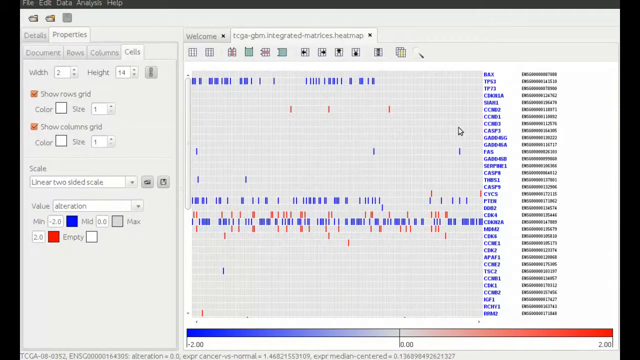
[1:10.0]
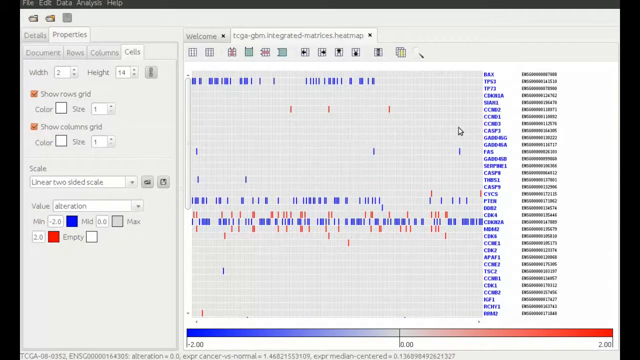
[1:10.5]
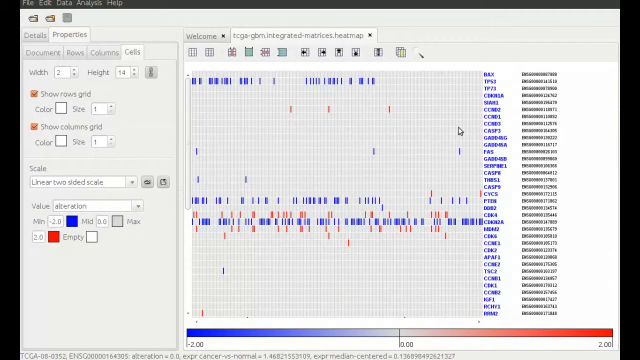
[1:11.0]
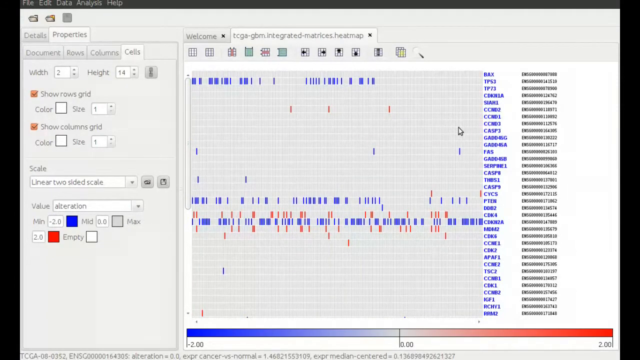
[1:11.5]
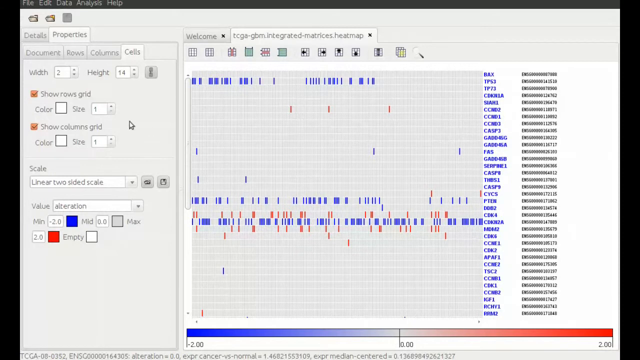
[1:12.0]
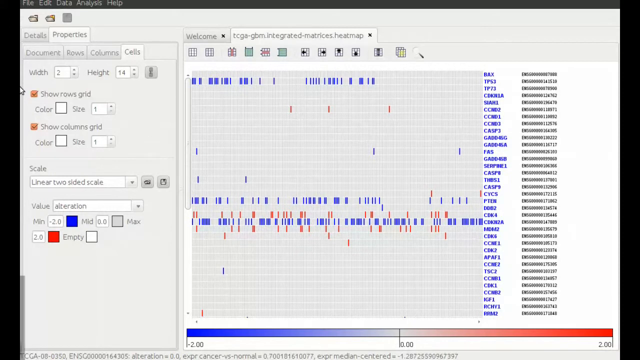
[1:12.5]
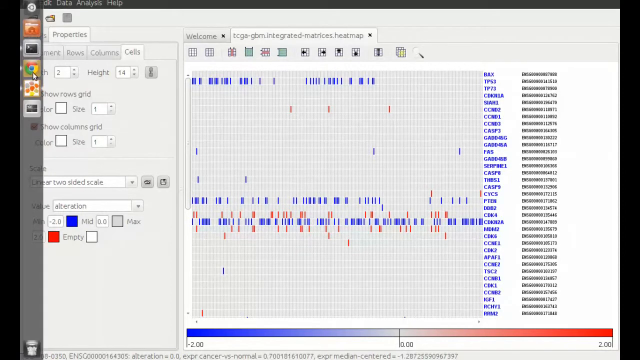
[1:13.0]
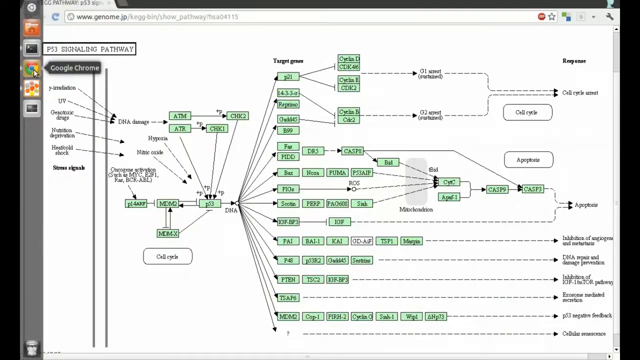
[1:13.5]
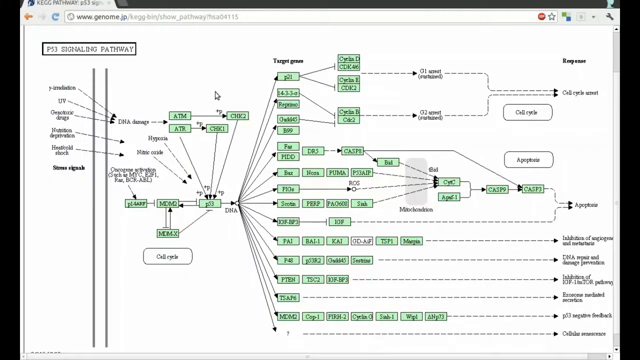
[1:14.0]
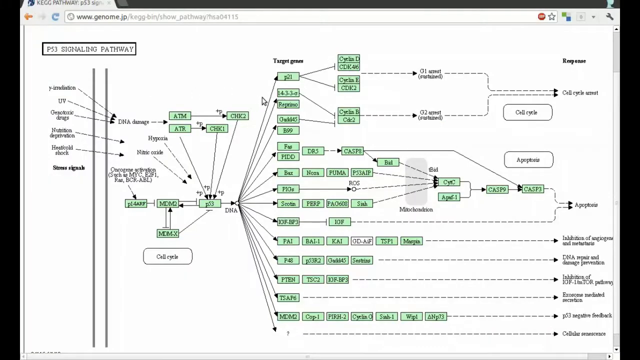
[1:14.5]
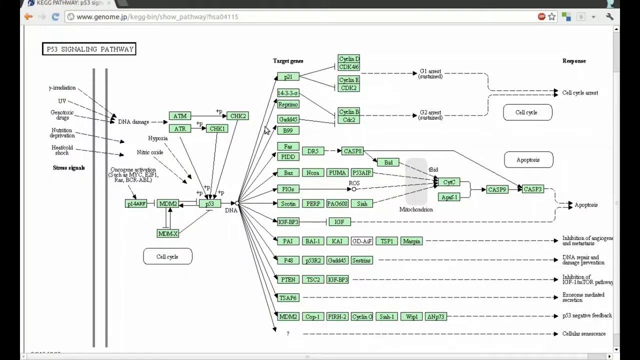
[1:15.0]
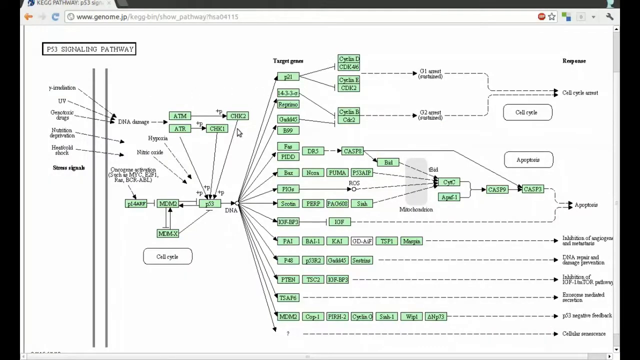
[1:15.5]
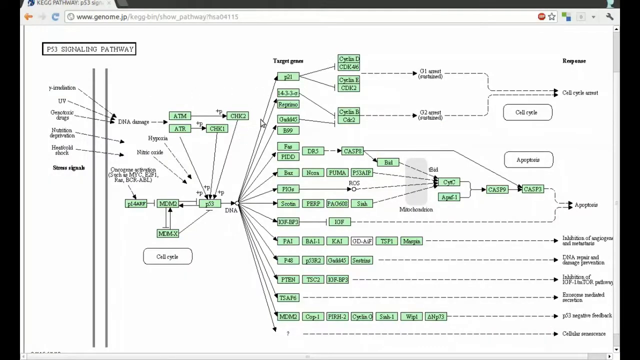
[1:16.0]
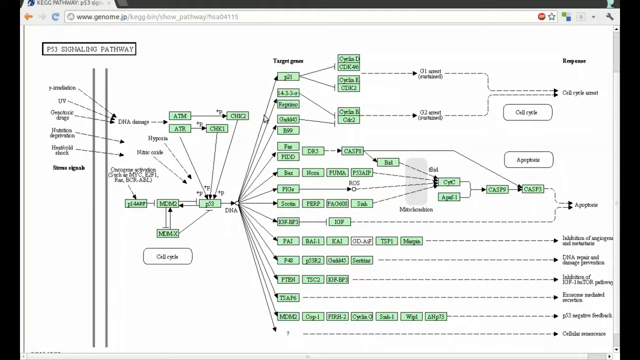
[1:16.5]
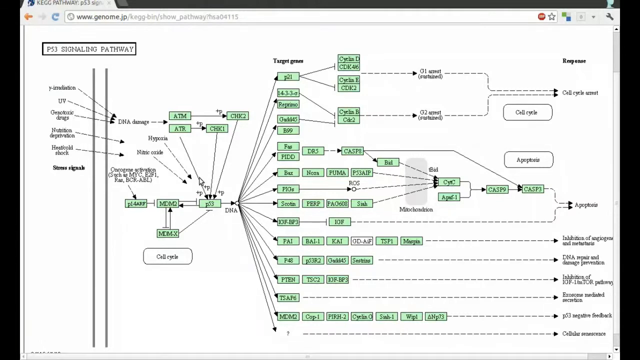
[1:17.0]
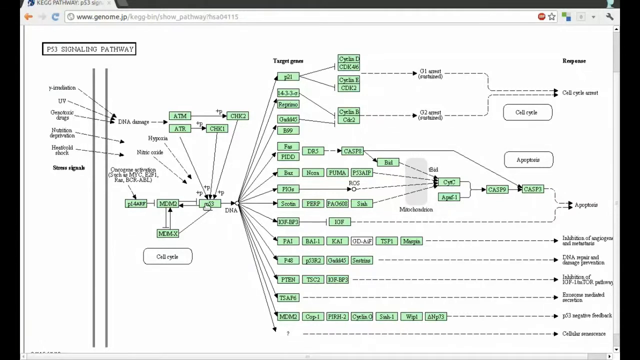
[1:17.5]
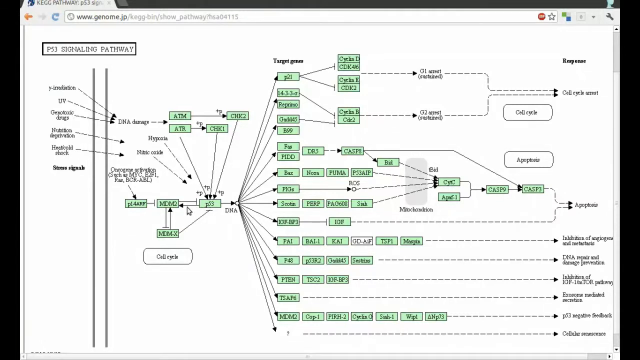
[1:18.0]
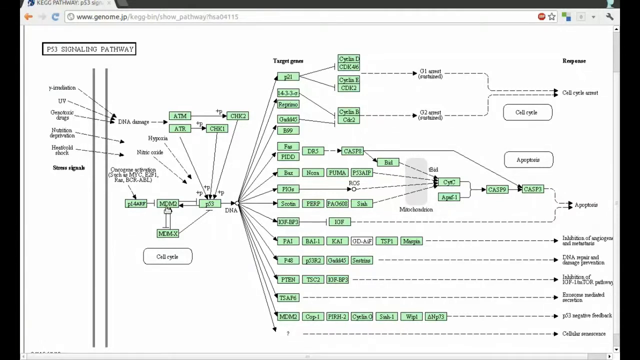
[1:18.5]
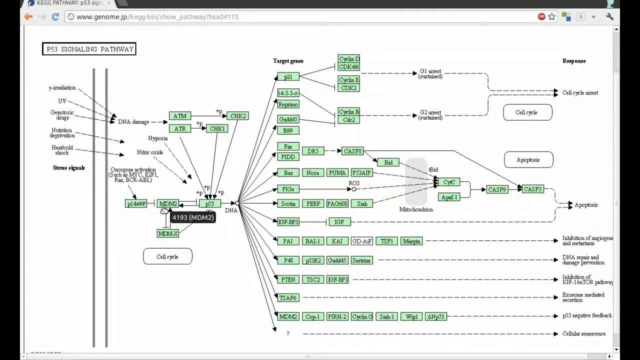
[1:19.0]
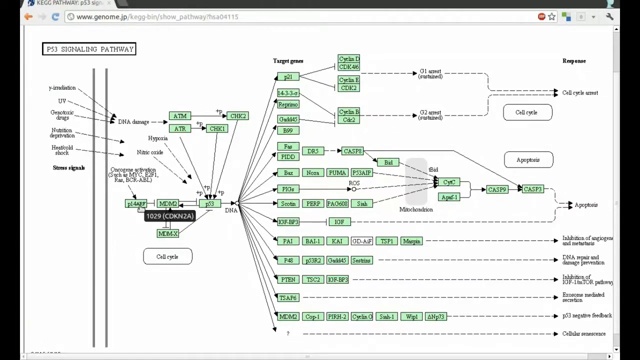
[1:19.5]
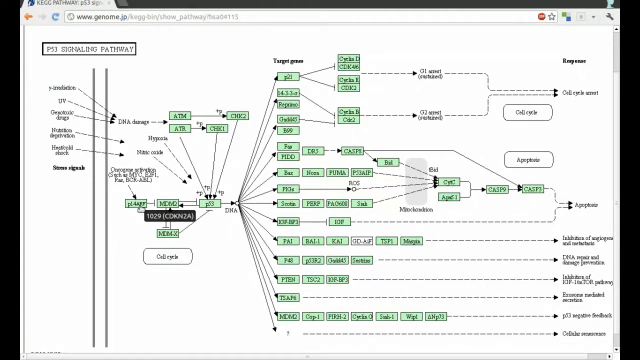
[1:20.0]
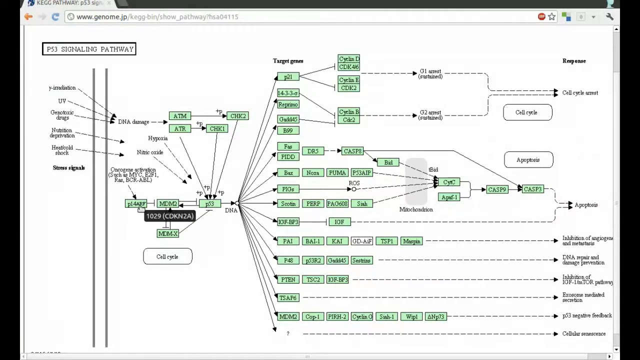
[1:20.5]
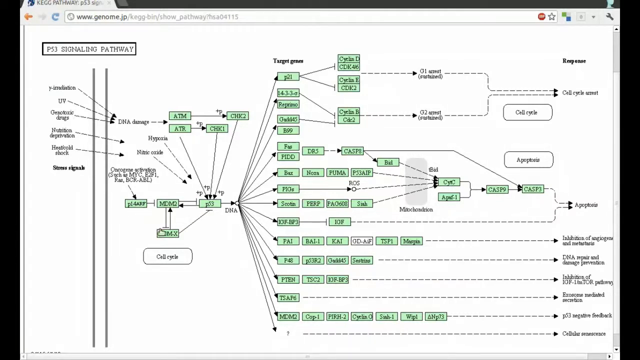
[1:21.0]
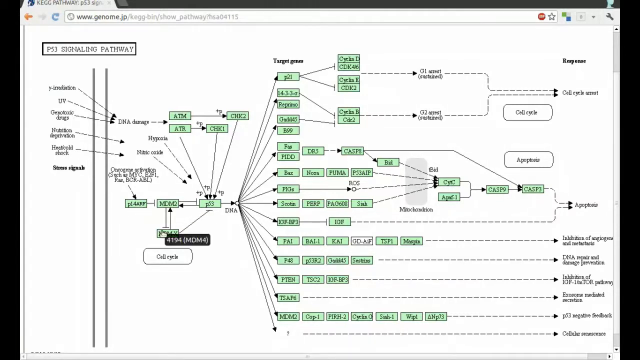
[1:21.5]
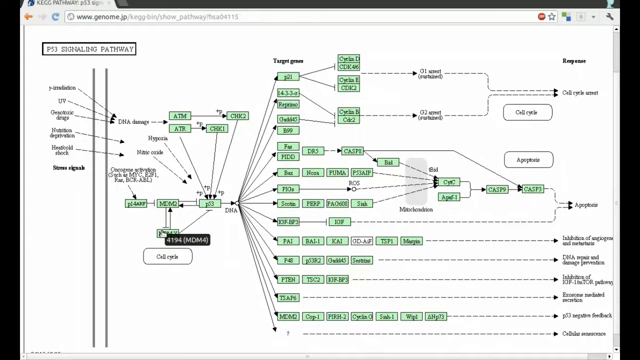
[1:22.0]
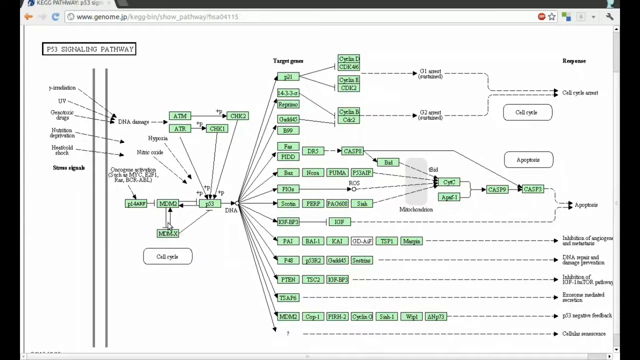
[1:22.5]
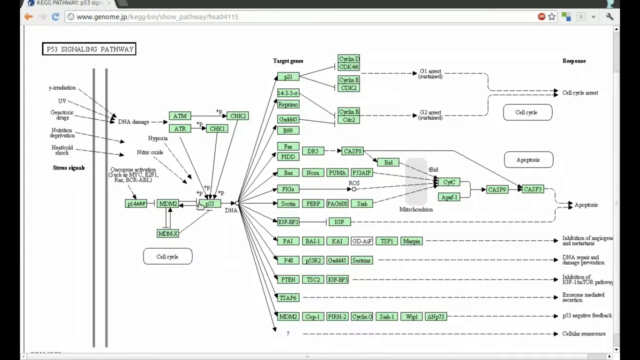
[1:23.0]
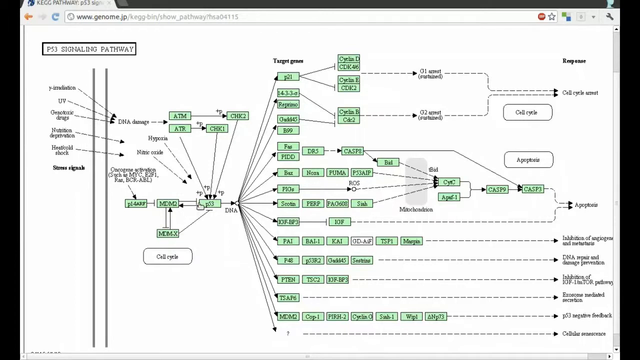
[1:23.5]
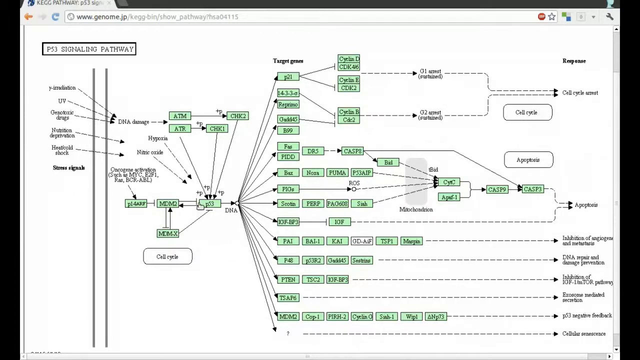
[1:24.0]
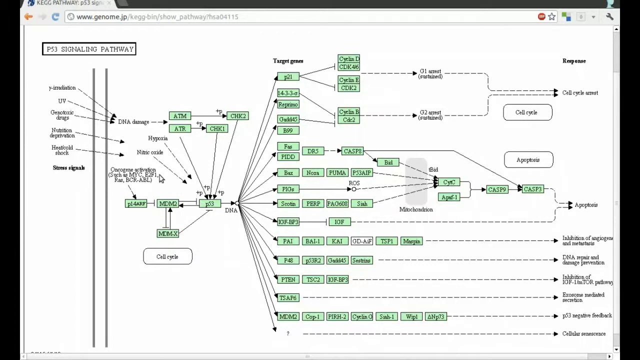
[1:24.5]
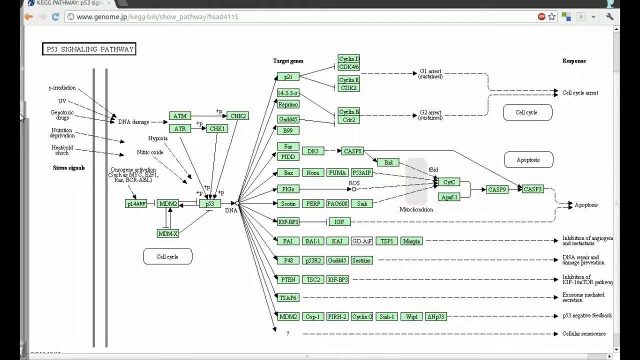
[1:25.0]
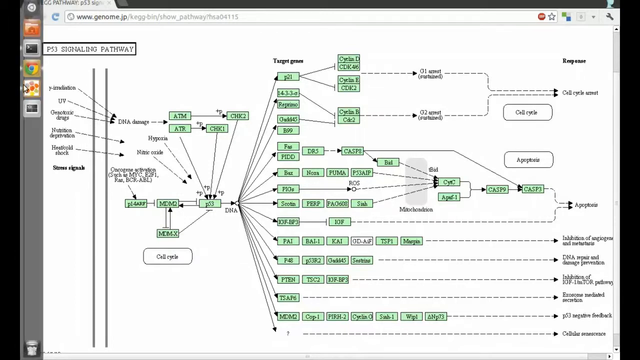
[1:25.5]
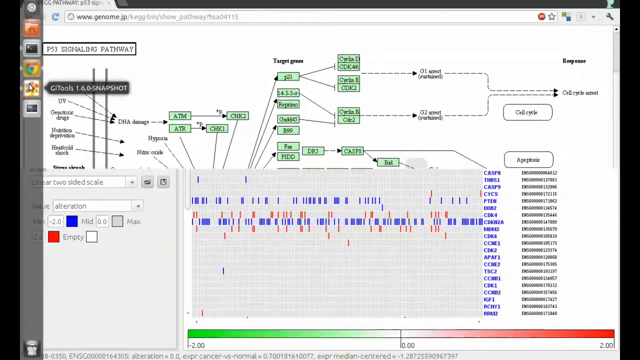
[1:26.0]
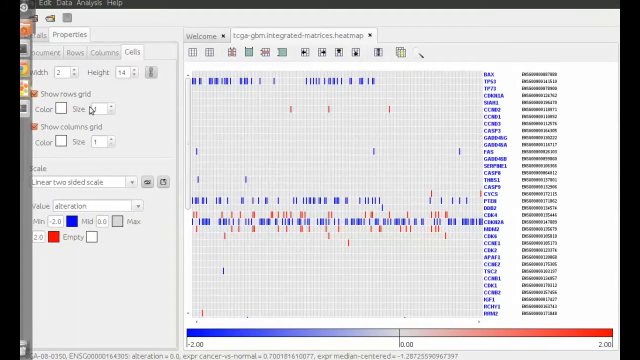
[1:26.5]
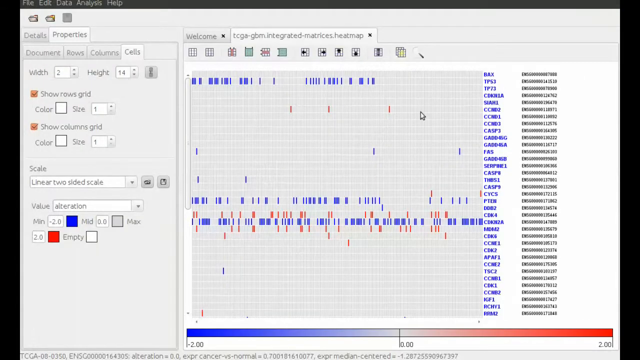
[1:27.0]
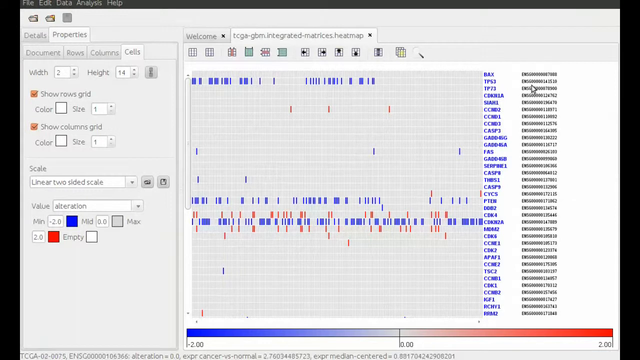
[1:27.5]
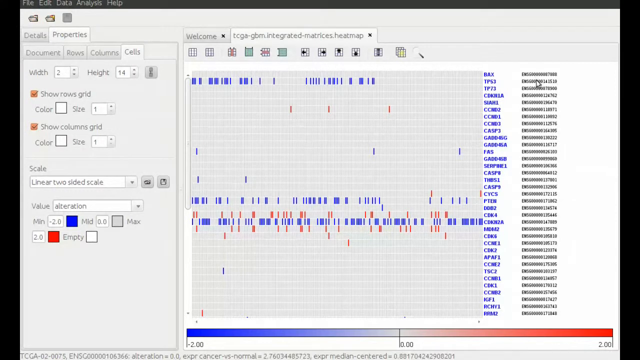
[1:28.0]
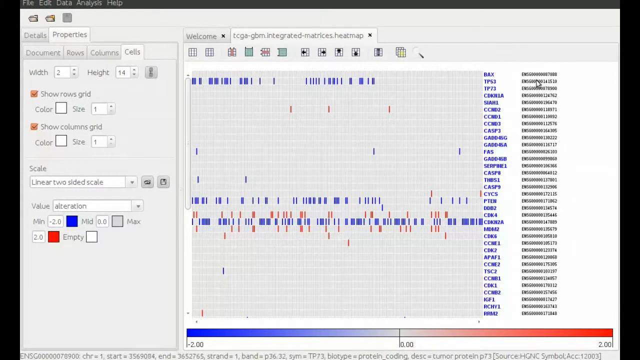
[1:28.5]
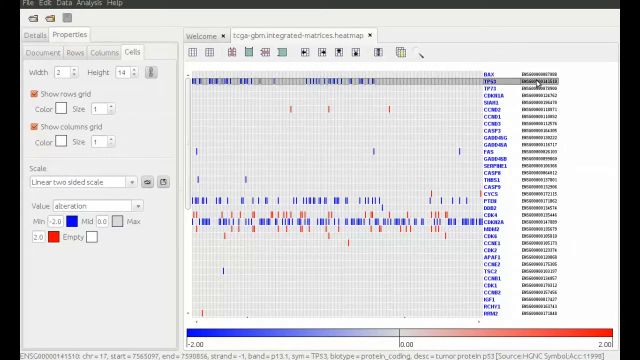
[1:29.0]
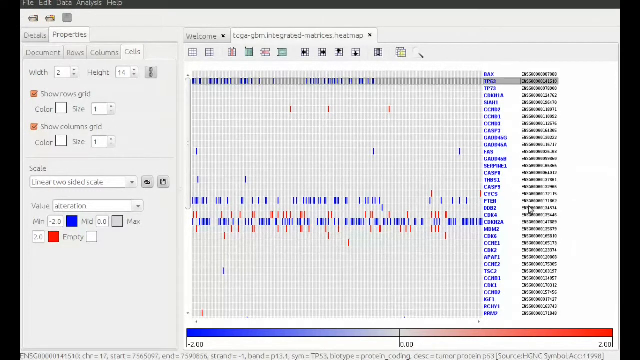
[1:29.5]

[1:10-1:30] With the data changed to the alteration value, the user moves the mouse to the left to make the left margin menu pop up and clicks the third option, the Google Chrome icon, to access the browser. The screen returns to the browser on genome.jp showing the p53 signaling pathway diagram. The user hovers over the P53 and MDM2 green rectangular labeled boxes as well as the P14ARF and MDMX boxes, looking at the tags that pop up over each label. The user then moves the mouse to the left side of the screen again to bring up the side menu and clicks the fourth icon, the flower-shaped Gitools icon, which takes them back to the Gitools window.